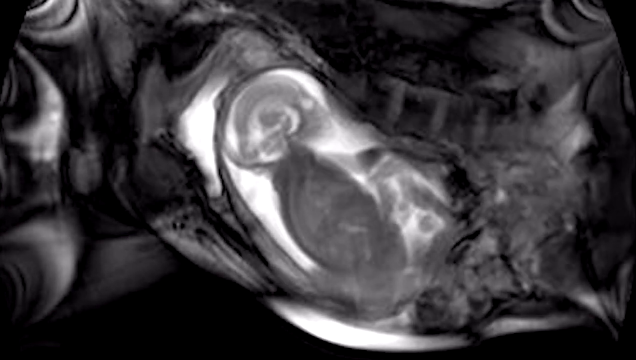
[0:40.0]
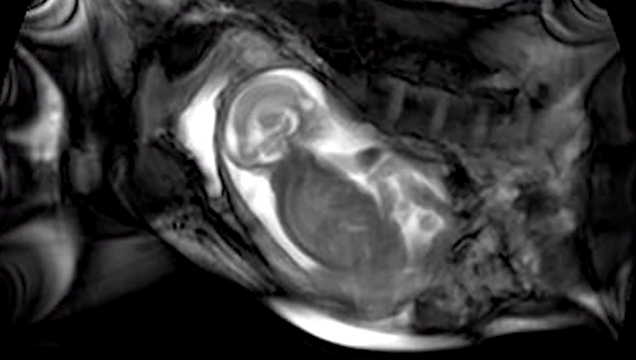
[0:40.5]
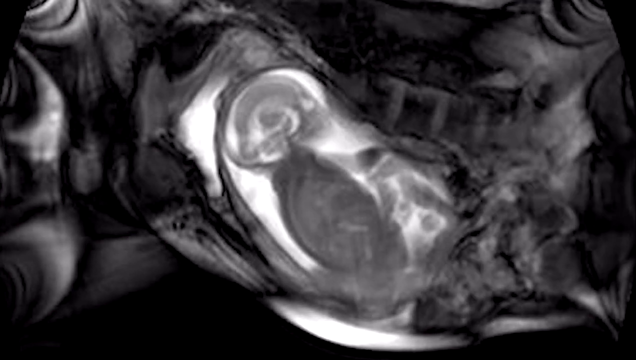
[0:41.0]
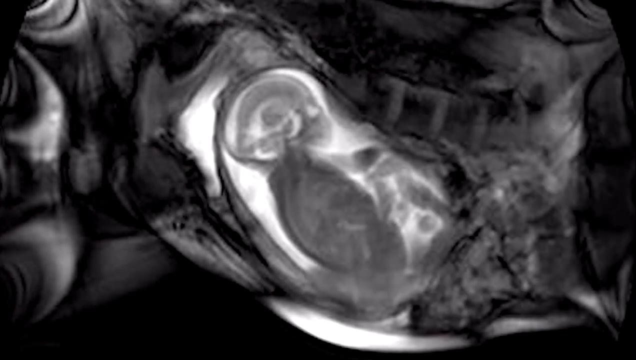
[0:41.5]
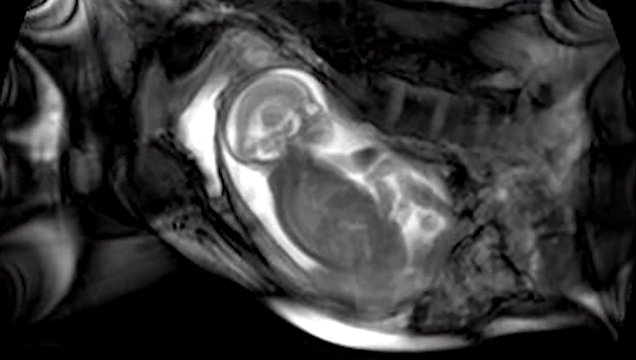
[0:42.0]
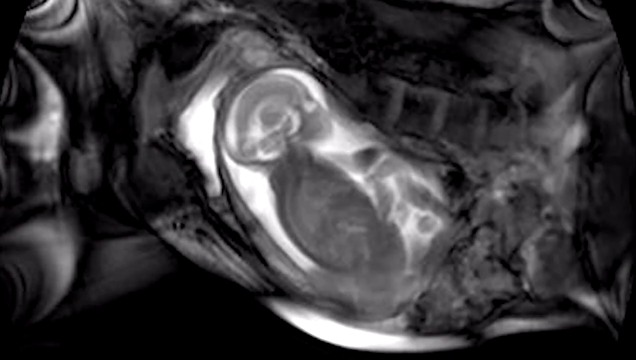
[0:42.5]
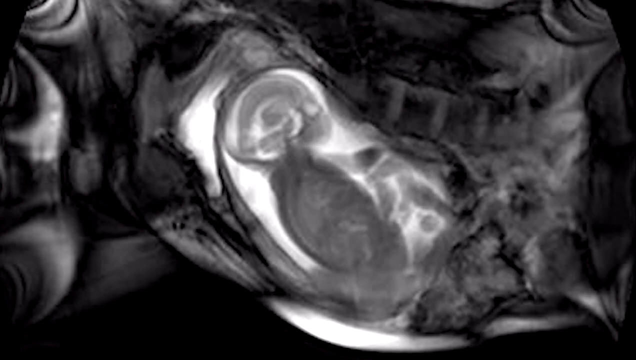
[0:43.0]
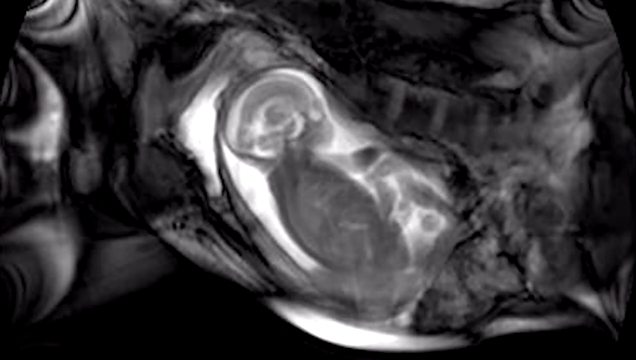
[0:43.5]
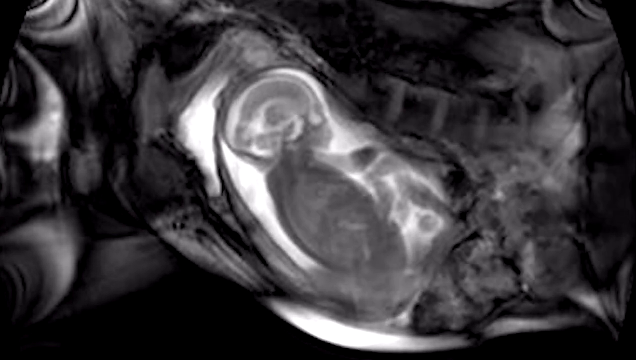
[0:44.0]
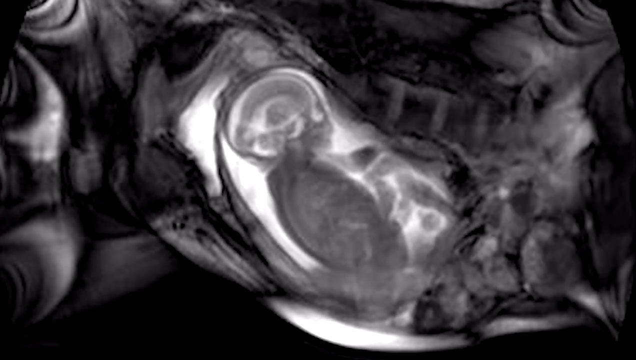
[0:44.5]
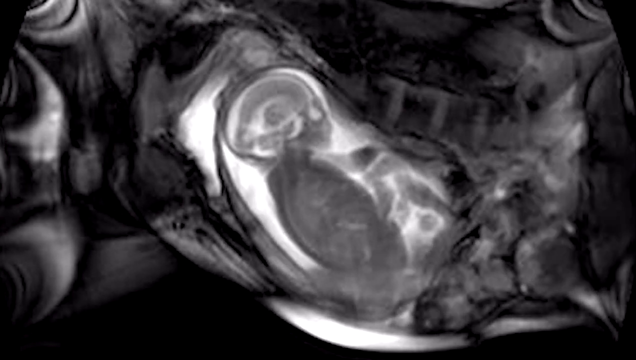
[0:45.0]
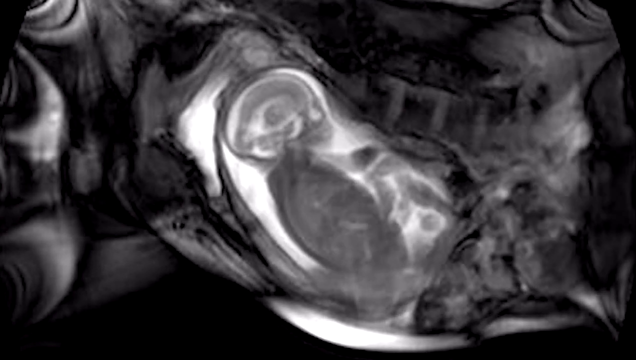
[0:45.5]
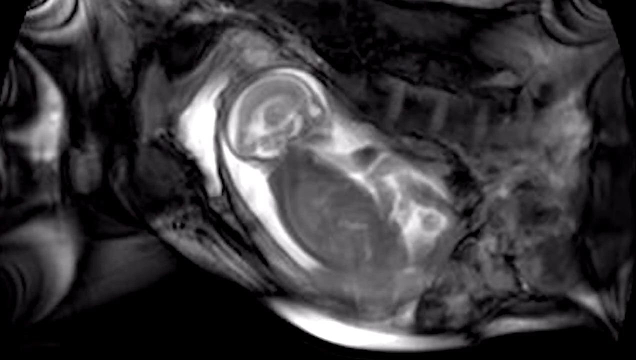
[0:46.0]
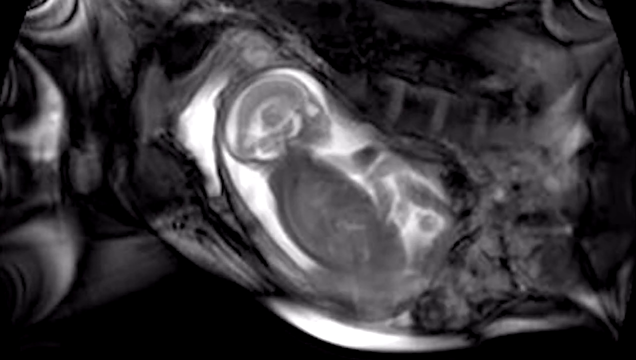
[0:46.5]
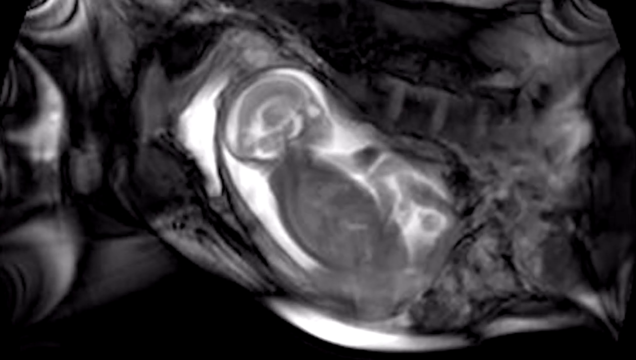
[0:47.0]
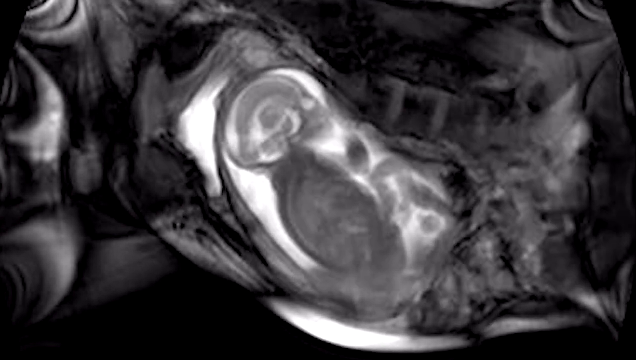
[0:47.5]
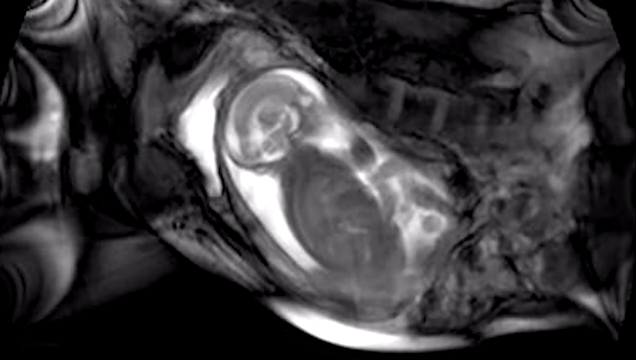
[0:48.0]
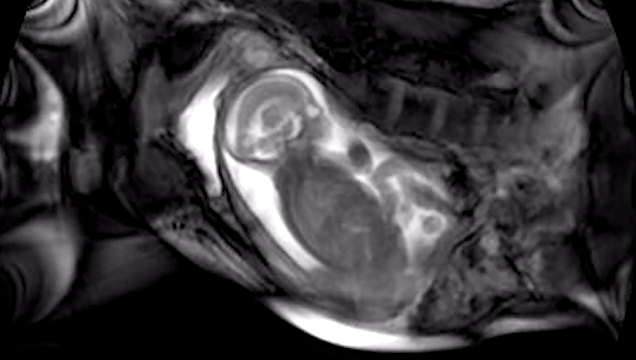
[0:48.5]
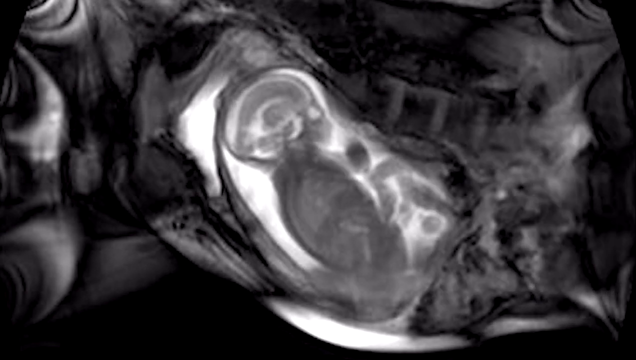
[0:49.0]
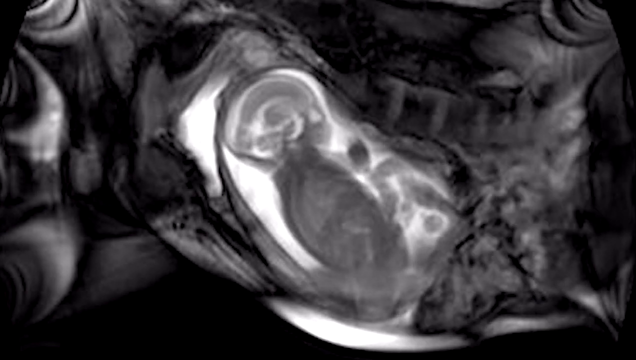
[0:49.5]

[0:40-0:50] A baby that looks to be in an amniotic sac has a bit of a grey silhouette. Bright white surrounds the sac, along with what looks to be other organs or something surrounding the baby. There appears to be movement on the right, possibly organs, maybe a heart beating. The baby inside the sac is kind of moving around a bit; its head kind of moves upward, and it almost looks like the baby is trying to talk. The baby moves its hands. There are quite a lot of shadows as well as some areas of white.